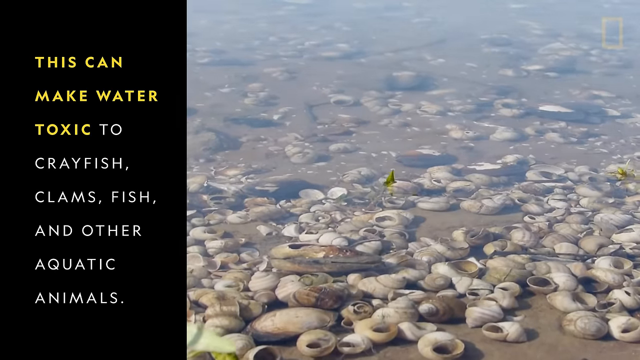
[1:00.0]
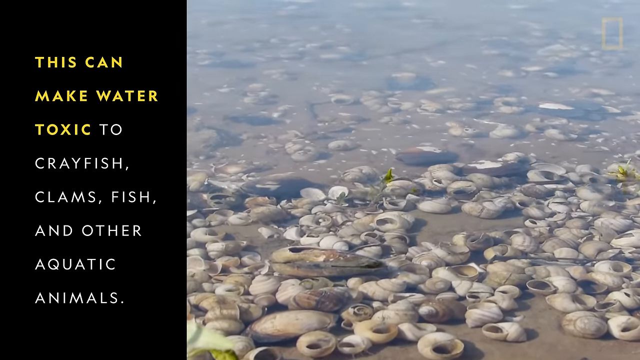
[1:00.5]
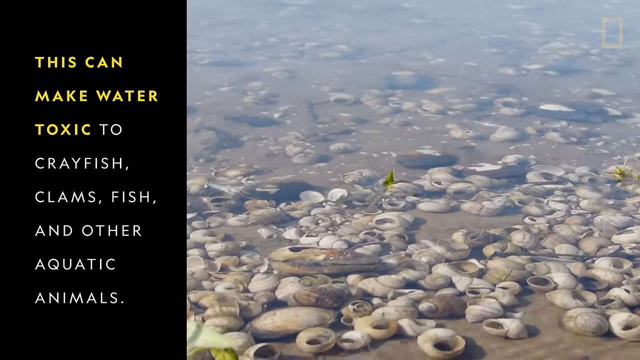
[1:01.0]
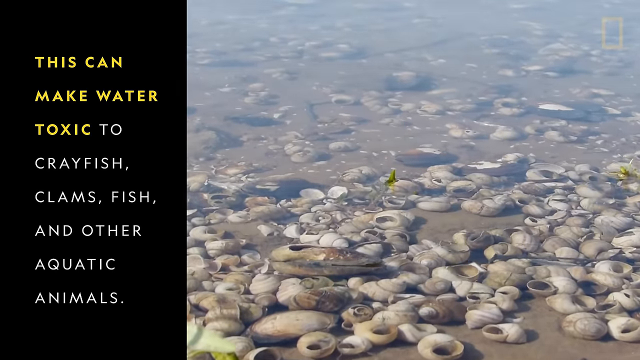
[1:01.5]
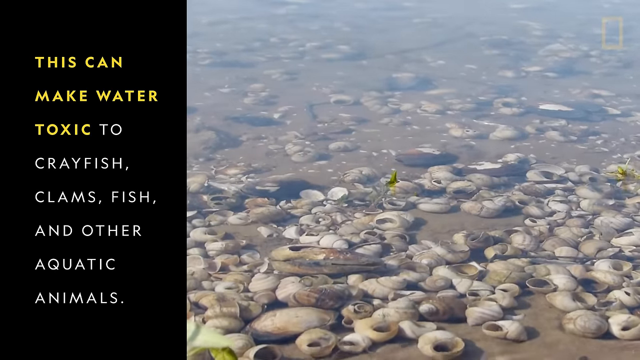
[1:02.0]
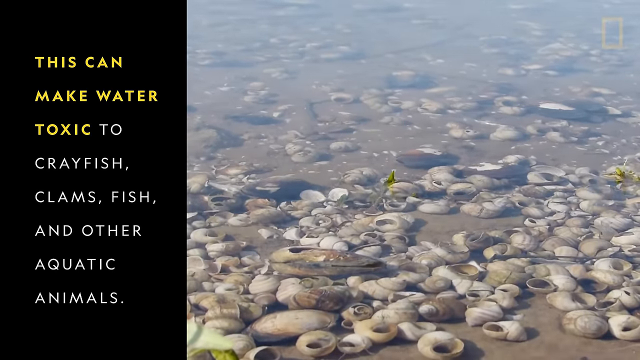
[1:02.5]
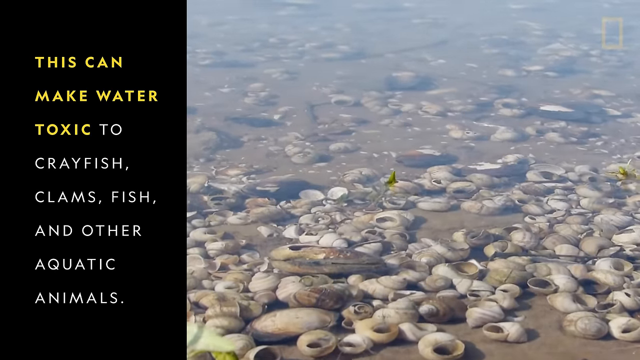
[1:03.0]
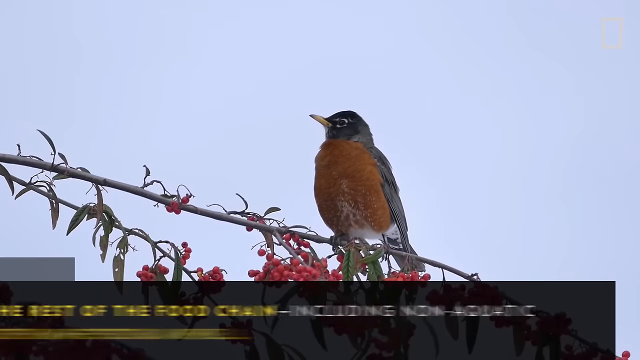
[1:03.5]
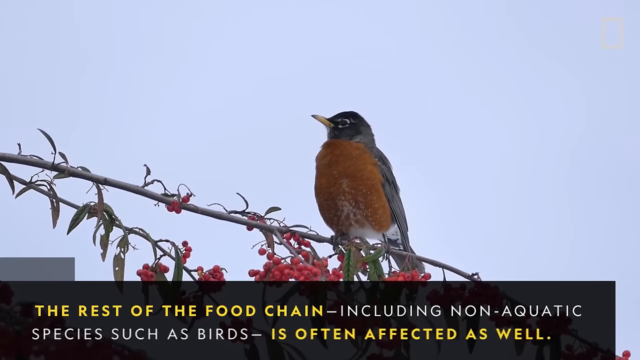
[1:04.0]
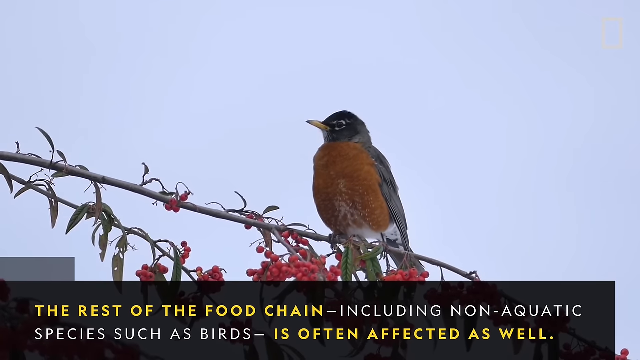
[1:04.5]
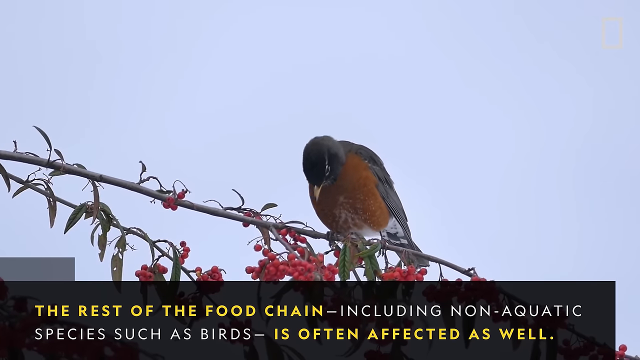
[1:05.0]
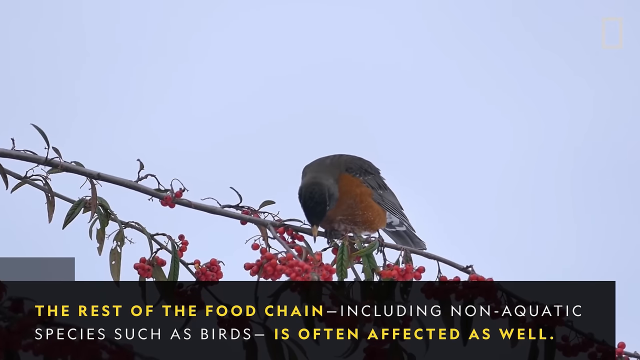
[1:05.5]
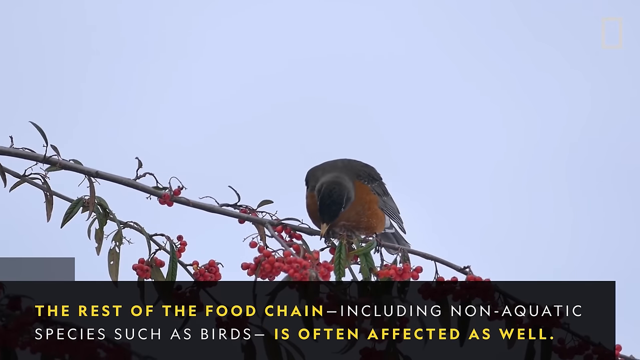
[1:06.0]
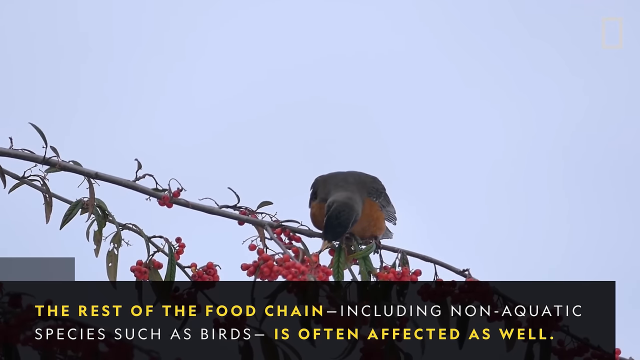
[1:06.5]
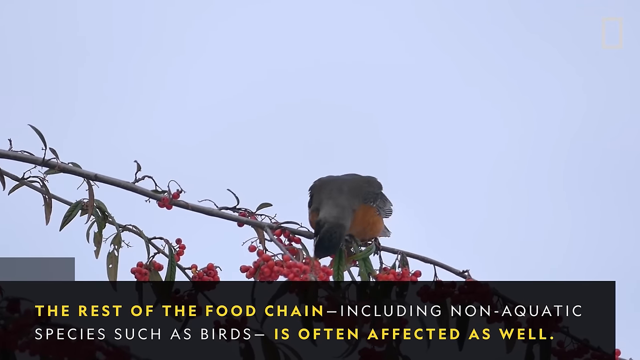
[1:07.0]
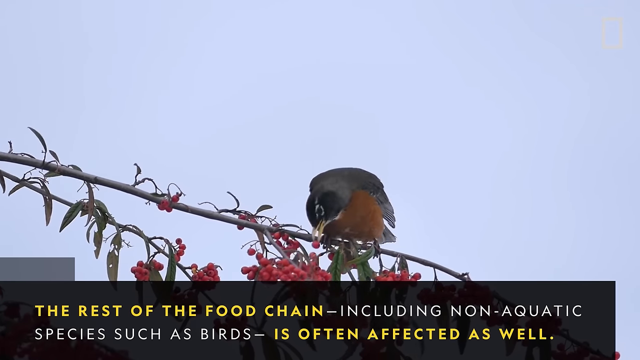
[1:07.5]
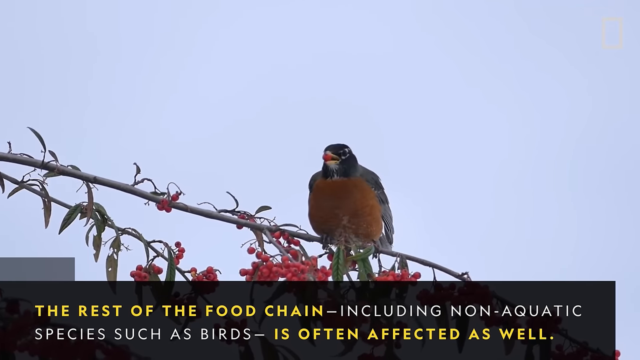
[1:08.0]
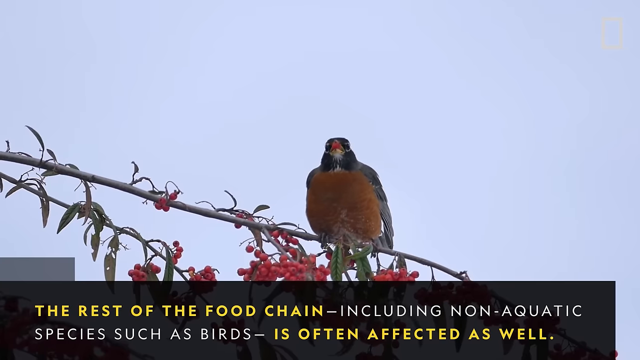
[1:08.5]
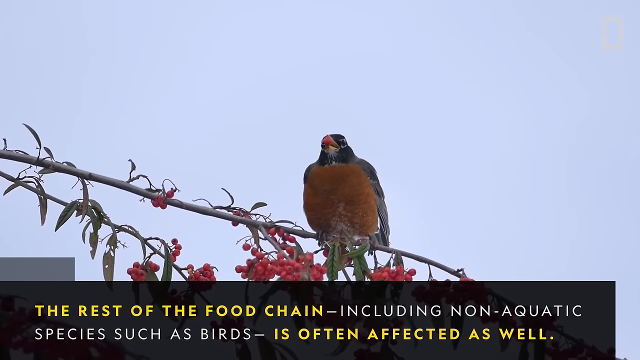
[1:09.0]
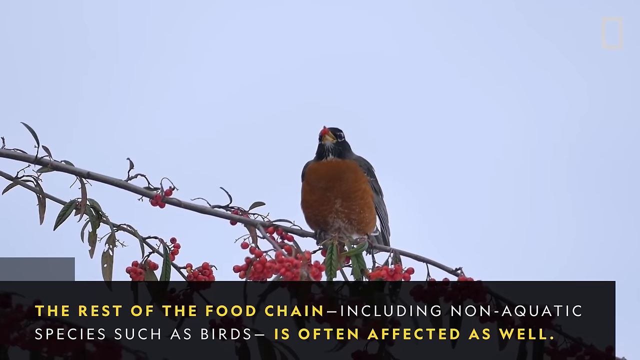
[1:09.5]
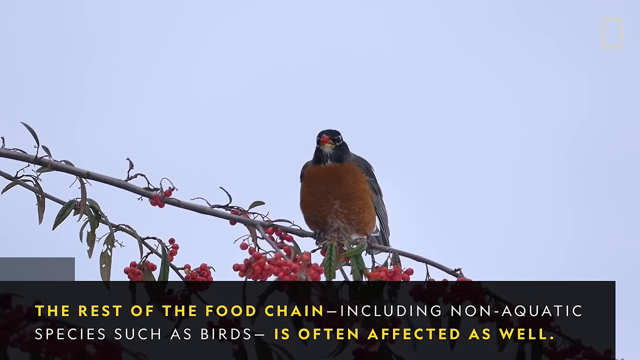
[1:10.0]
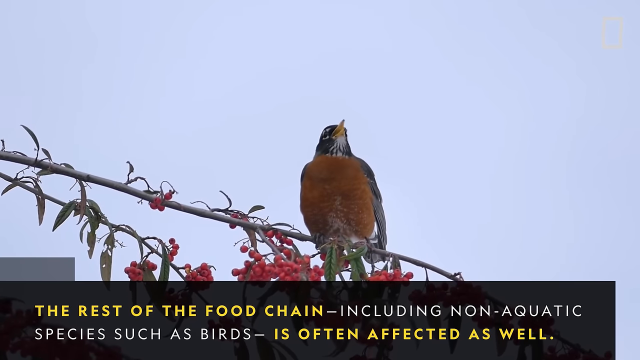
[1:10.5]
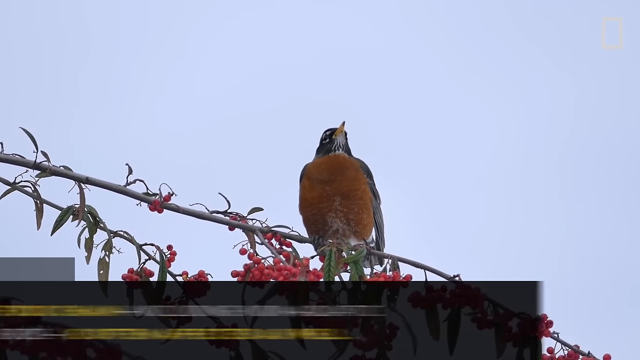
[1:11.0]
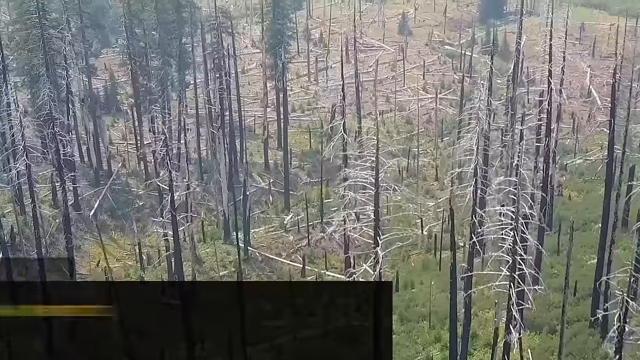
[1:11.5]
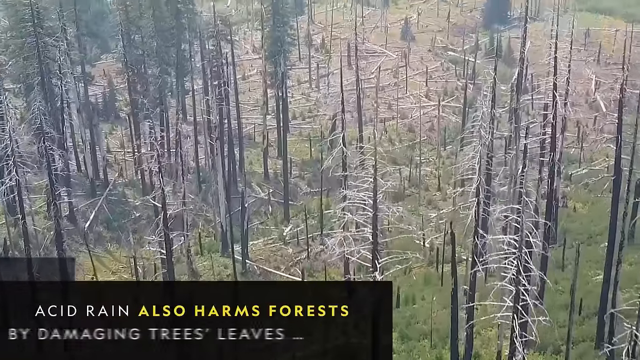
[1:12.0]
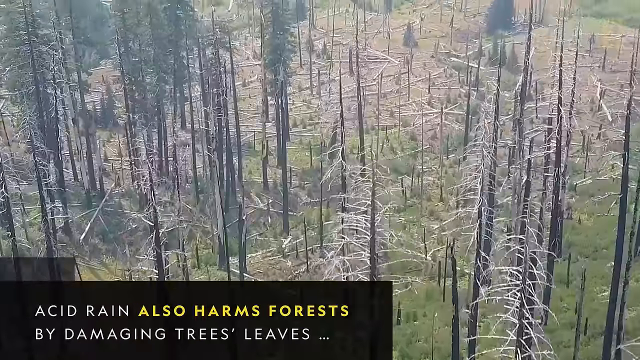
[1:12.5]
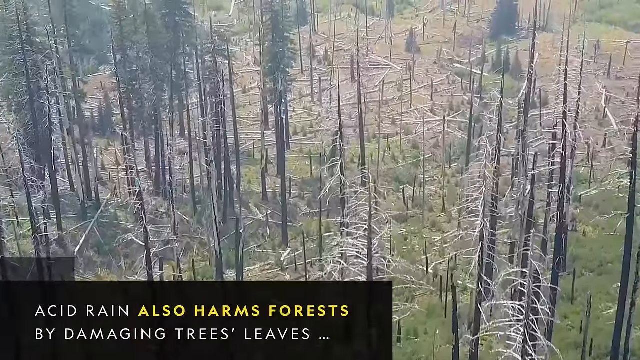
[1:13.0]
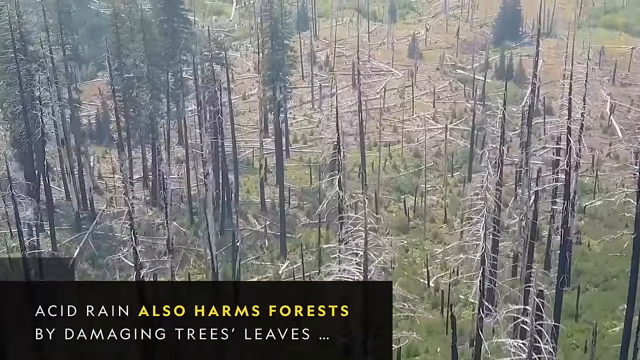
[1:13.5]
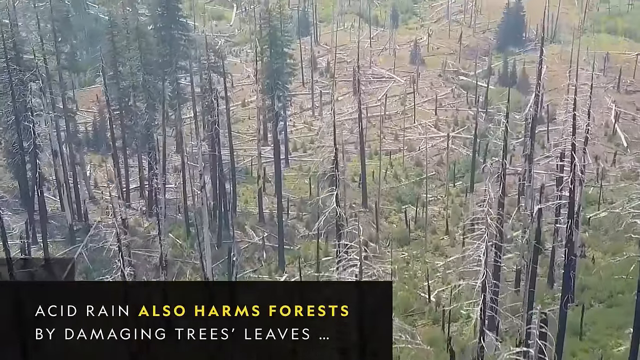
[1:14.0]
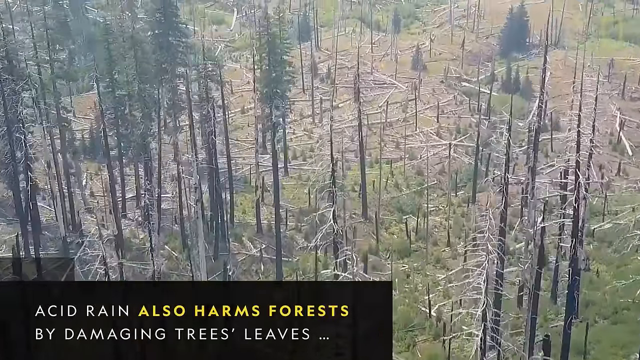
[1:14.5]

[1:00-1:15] The video shows what appear to be mollusks, along with fish and birds, and notes that the rest of the food chain, including non-aquatic species such as birds, is often affected as well. The focus possibly moves to the impact of acid rain on forests. The forests look badly damaged, more like they were logged. A bird is shown.